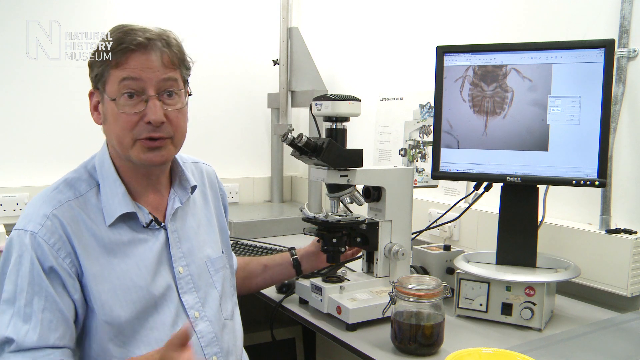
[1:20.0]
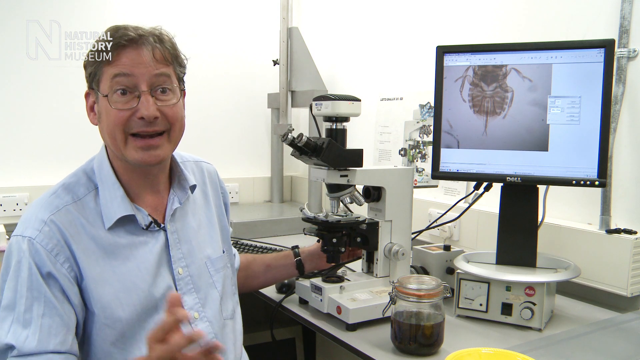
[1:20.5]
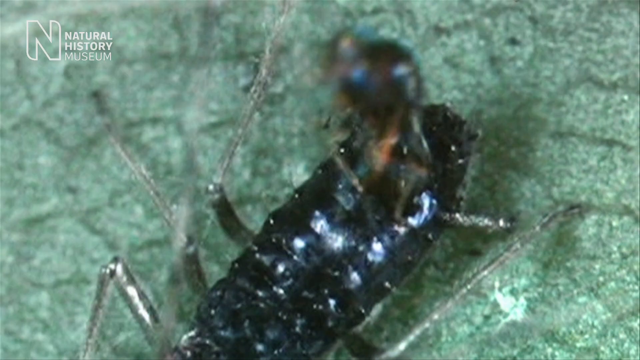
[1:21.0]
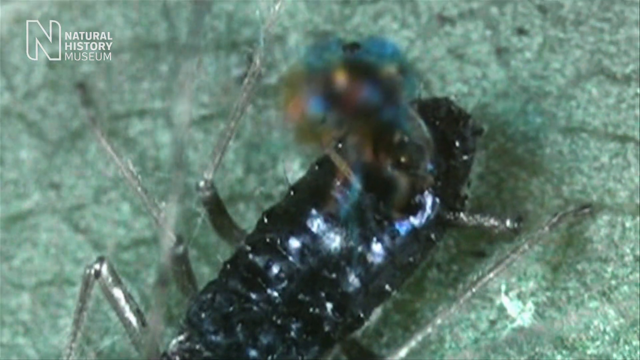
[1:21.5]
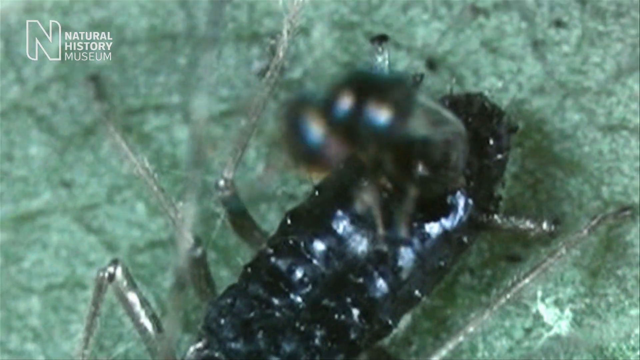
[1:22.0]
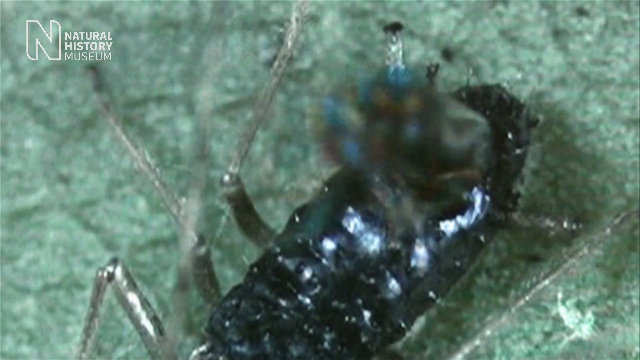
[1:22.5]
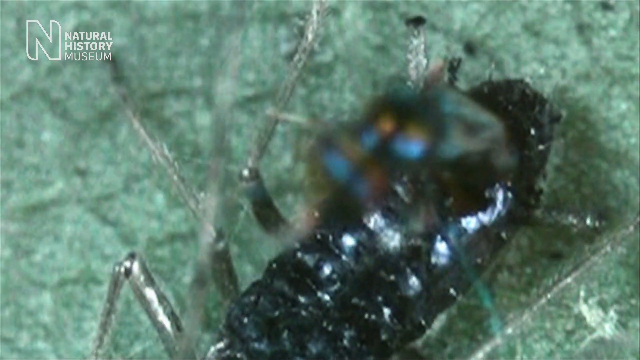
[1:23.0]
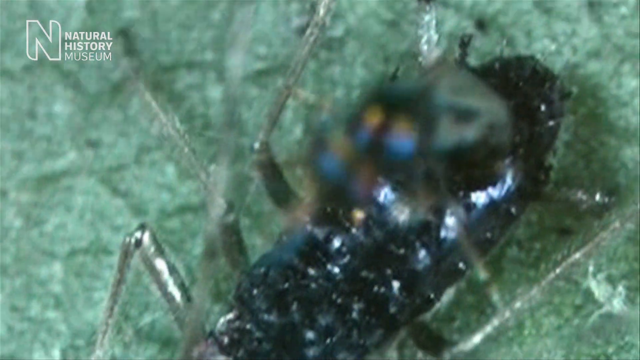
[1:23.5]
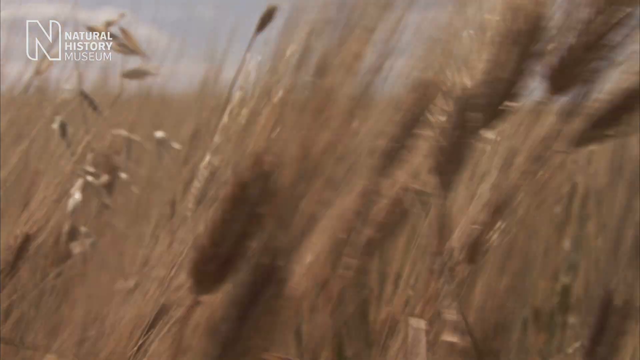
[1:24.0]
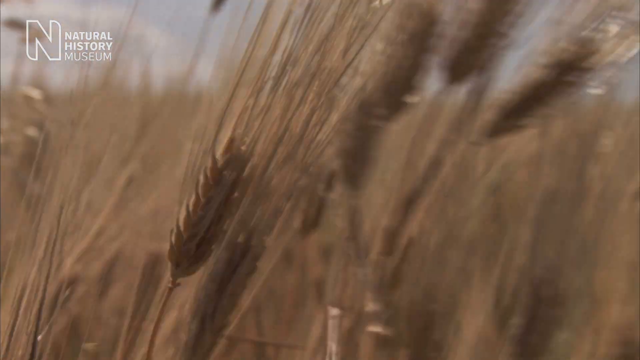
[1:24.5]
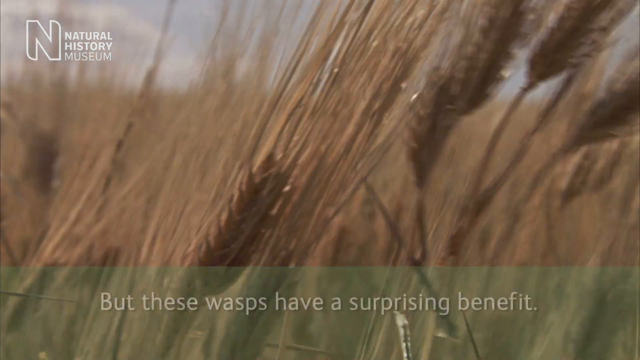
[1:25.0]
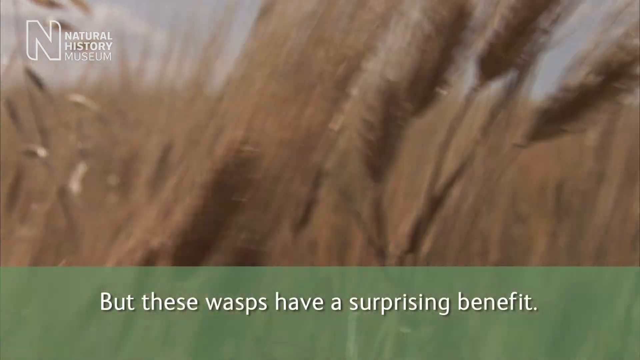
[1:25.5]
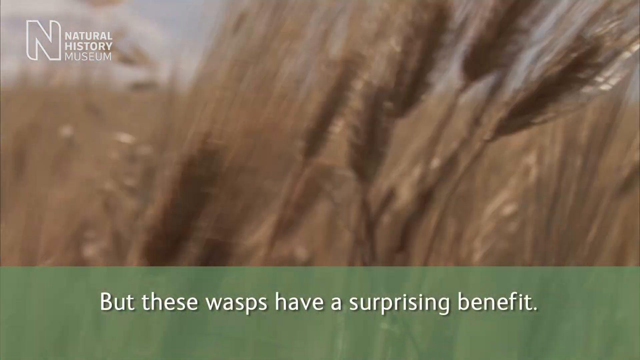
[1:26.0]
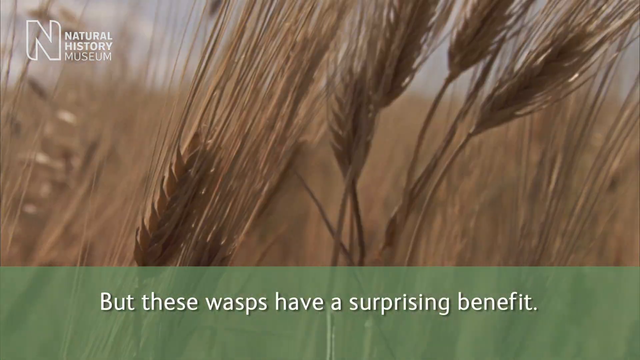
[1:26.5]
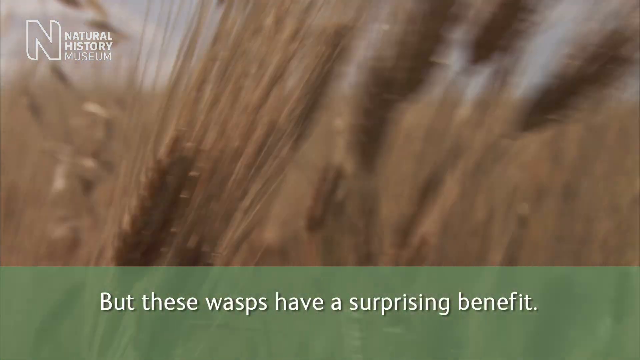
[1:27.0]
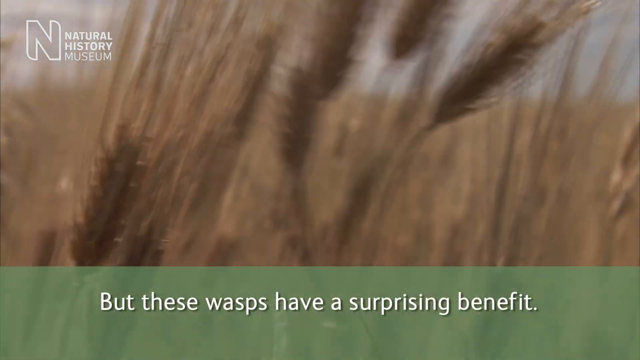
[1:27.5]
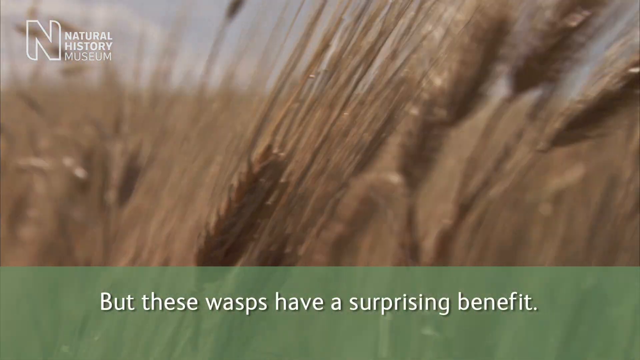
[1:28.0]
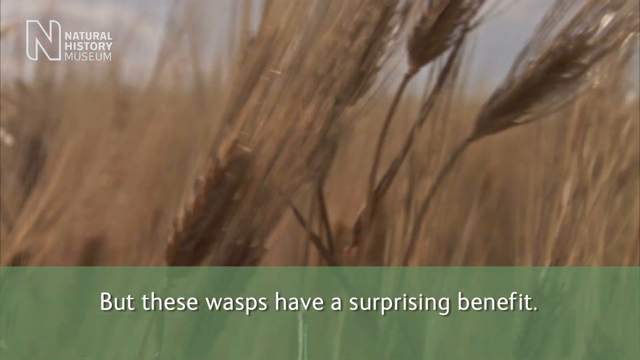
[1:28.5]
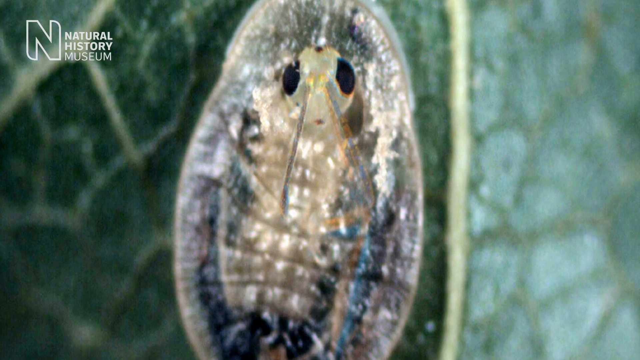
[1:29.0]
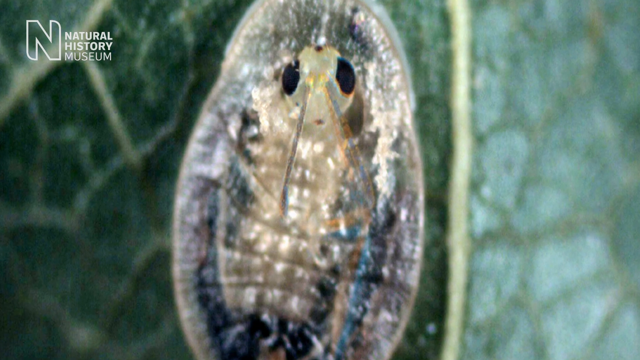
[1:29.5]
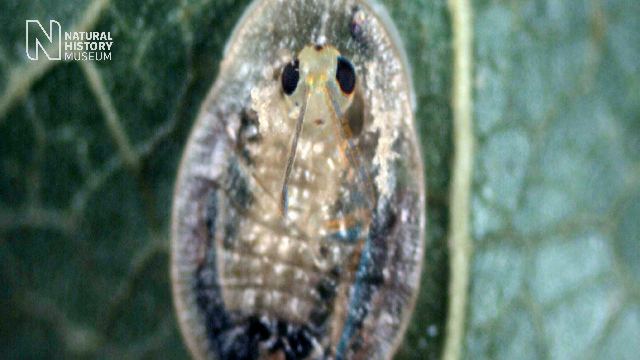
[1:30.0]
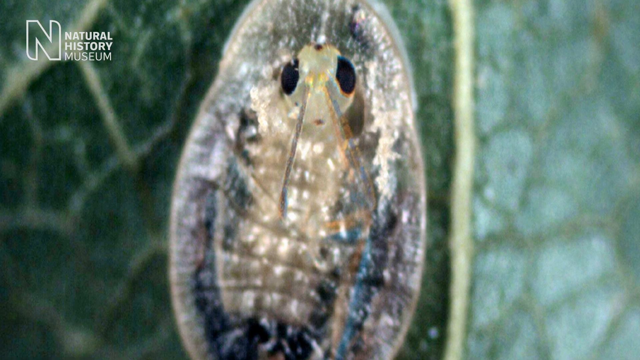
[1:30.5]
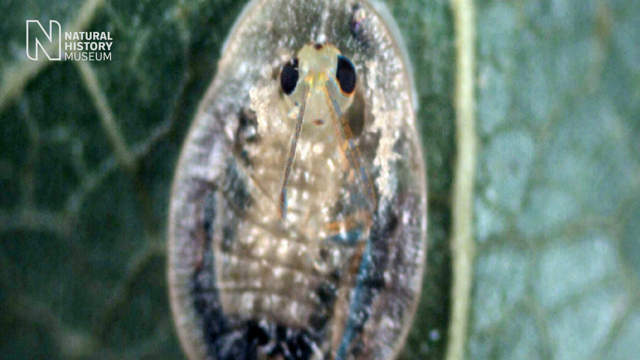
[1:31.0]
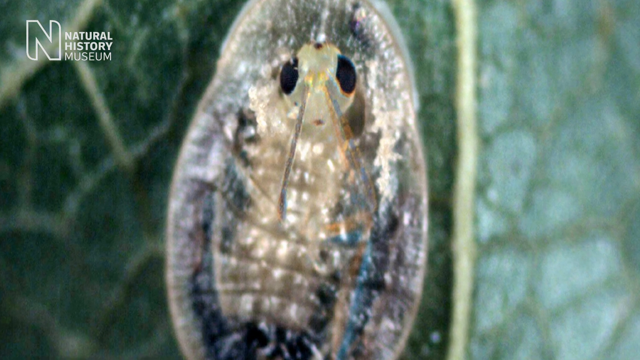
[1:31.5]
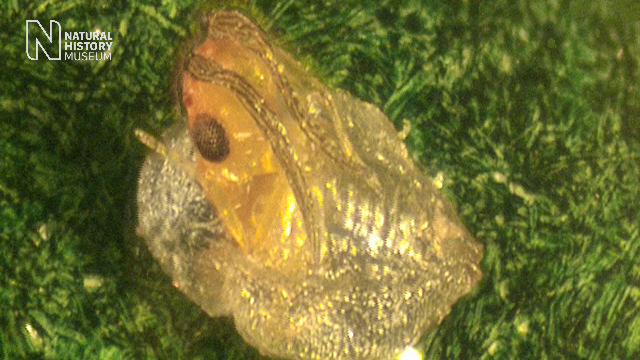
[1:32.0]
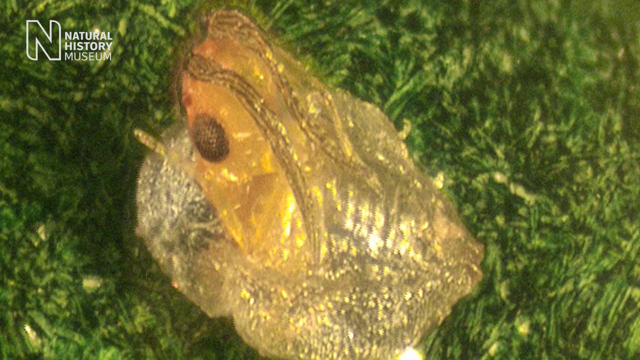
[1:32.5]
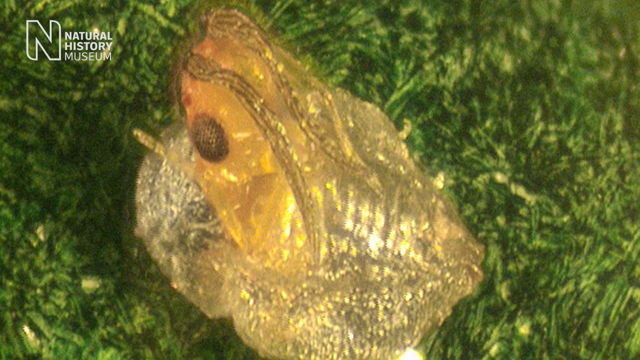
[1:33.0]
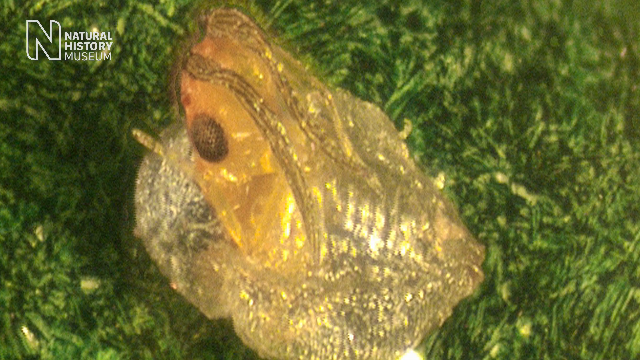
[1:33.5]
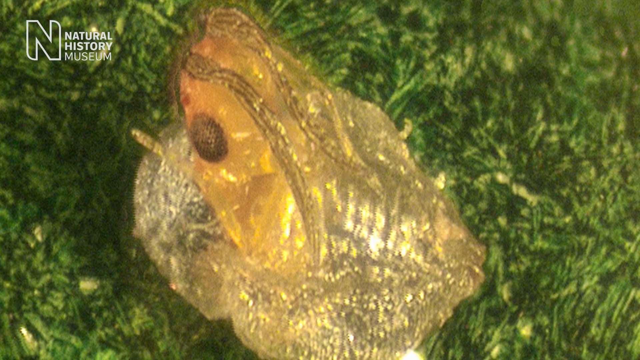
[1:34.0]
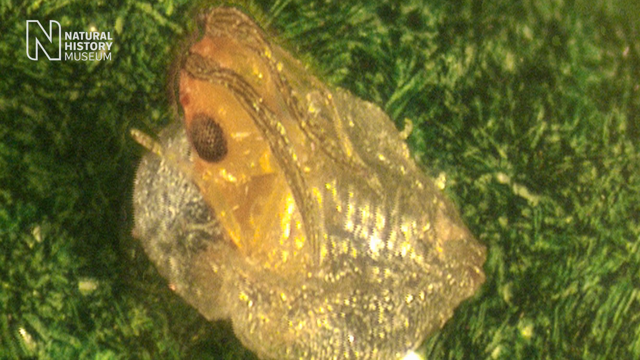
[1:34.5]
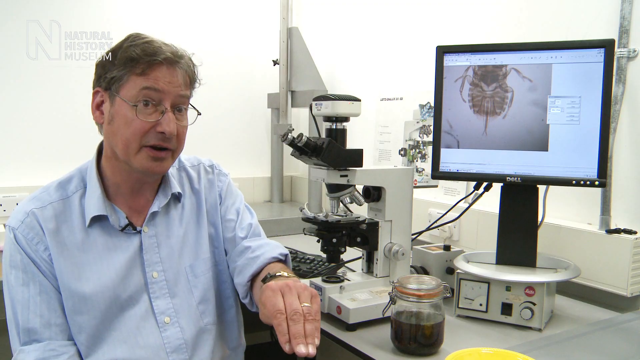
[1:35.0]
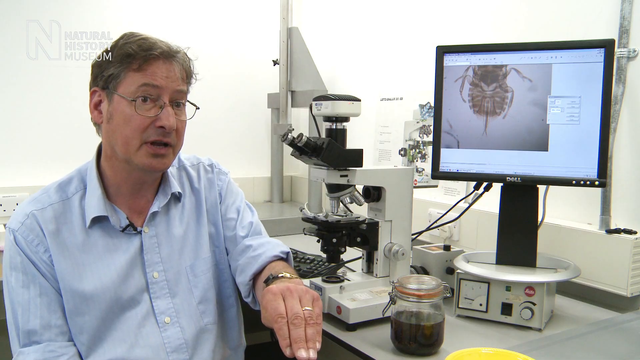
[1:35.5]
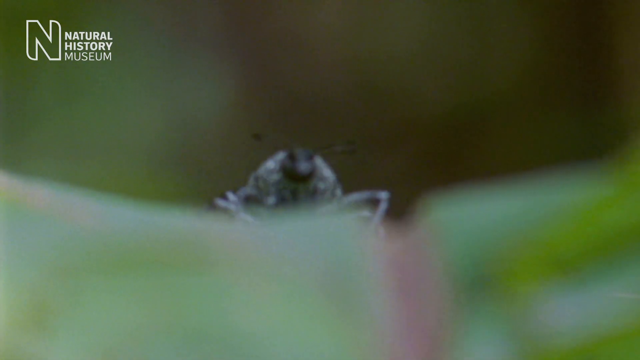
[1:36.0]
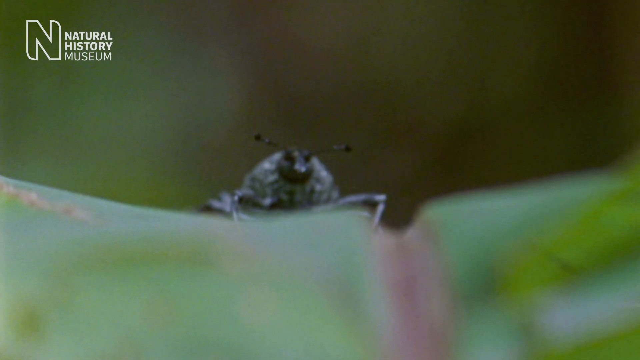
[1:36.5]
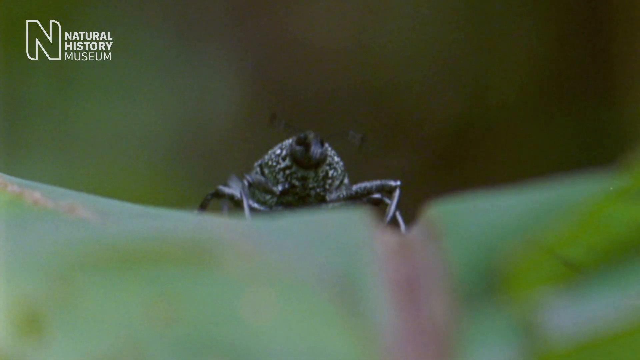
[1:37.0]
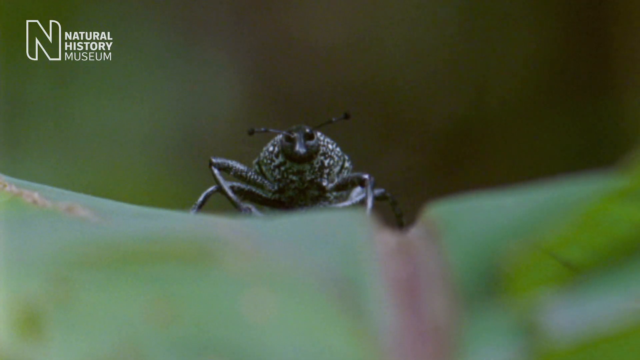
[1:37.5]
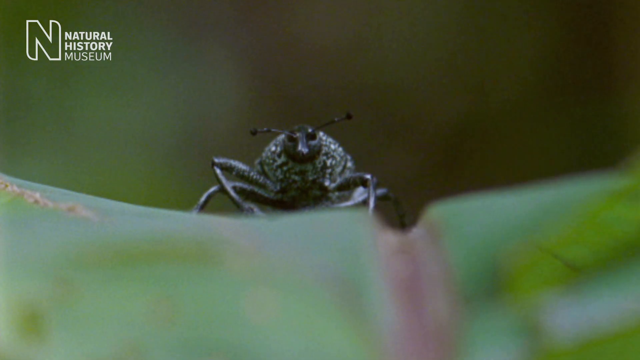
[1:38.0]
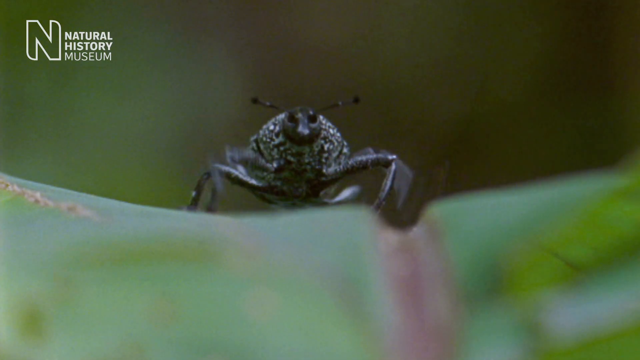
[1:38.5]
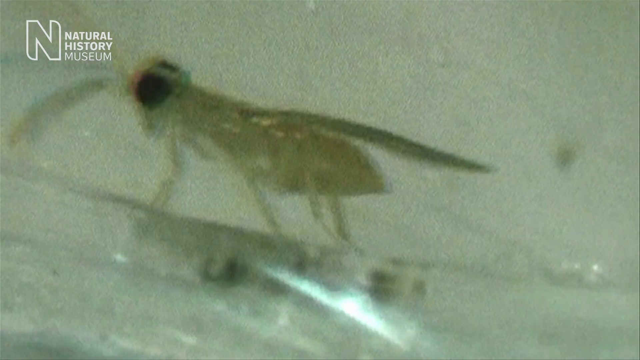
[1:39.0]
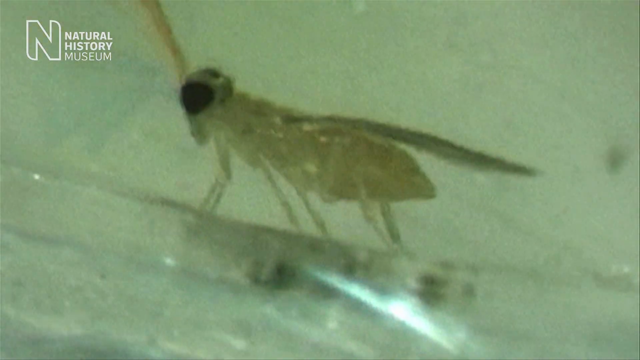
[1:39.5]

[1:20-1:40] Dr. Pugasta is shown again explaining things, with a close-up of the abdominal area of the wasp on the right-hand side. The video then shows what looked like the black shiny insect with the silver legs; it now appears that this could be the wasp larva coming out of the shell of another insect, with something emerging towards the head area. It has slight reds and blues, which might be an artefact of the lighting. The video then cuts to wheat waving gently in the wind, mostly pointing to the right, with text saying "the wasps have a surprising benefit". Close-ups show the ears of the wheat moving. Next is what could be another insect, possibly the wasp within another insect; two eyes are visible, it is vertical in the middle of the frame, and there is a green colour in the background that could relate to the wheat. Antennae are visible, and it could be the wasp within a larva, though it is hard to tell. Light shines on it quite well, showing some slight bluish and white colours, with veins from some sort of vegetation in the background, and the camera zooms in. Another shot has green in the background, possibly vegetation or moss, with another lit-up insect; it is hard to tell whether it is a larva, but it is translucent with golden colours and light coming inside it, and something could be an eye. The video returns to Dr. Kodaska explaining something, followed by a black insect with quite a fat body and legs coming towards the camera, moving its legs up and down and seeming to go across a horizontal stalk. Then the wasp appears, lit up with a translucent body and black eyes, moving very slightly from right to left and moving its wings, possibly walking along some vegetation.